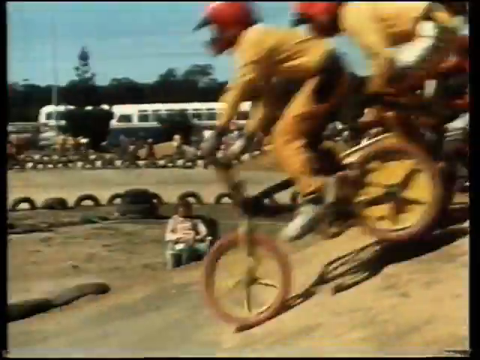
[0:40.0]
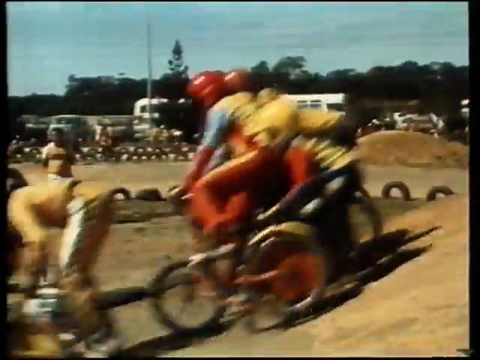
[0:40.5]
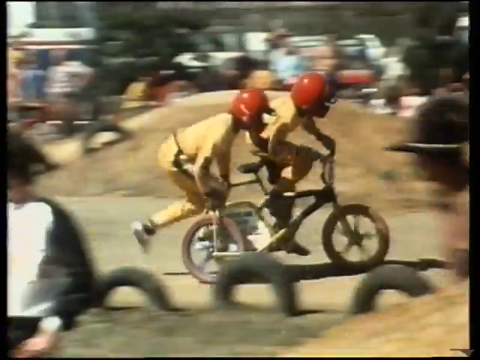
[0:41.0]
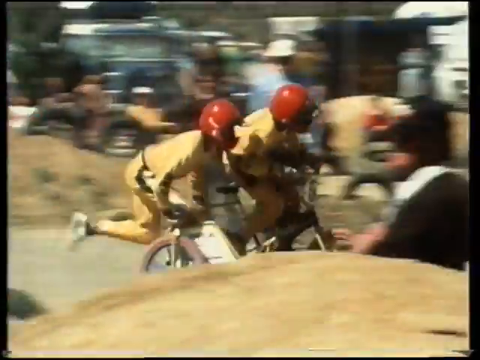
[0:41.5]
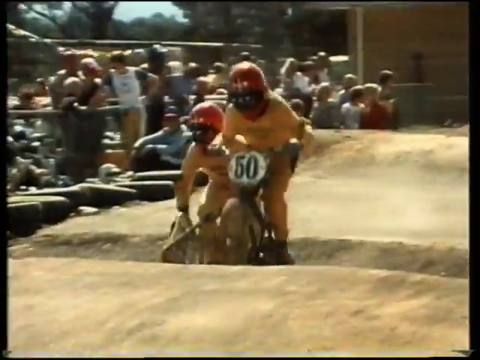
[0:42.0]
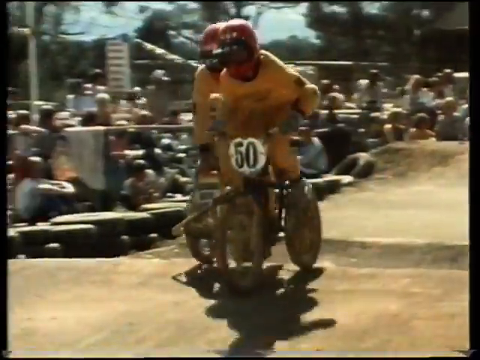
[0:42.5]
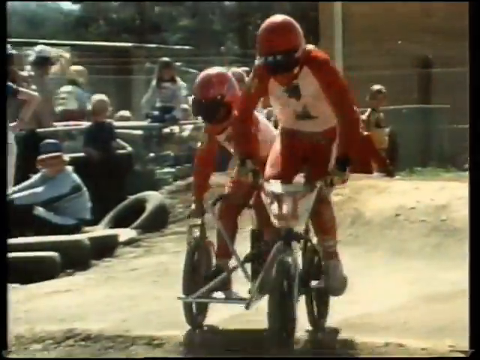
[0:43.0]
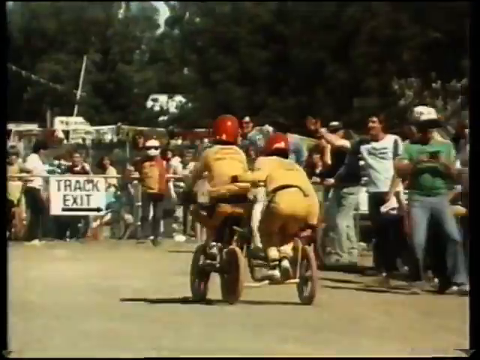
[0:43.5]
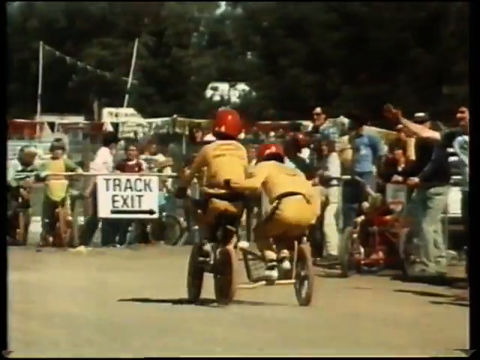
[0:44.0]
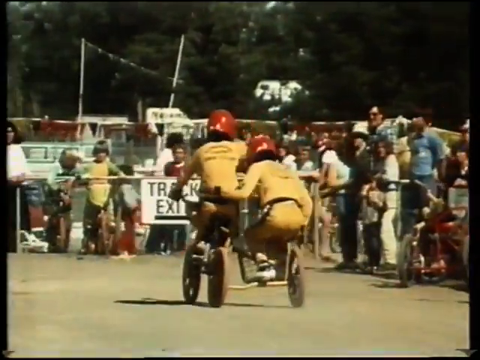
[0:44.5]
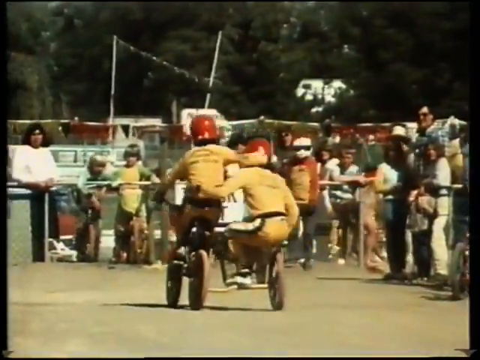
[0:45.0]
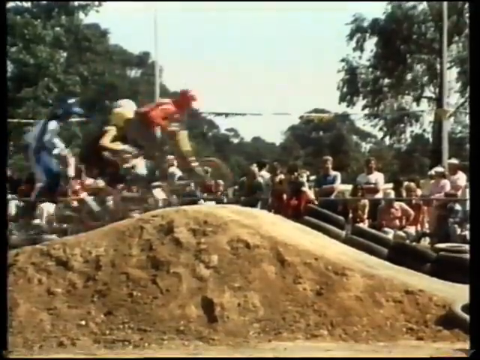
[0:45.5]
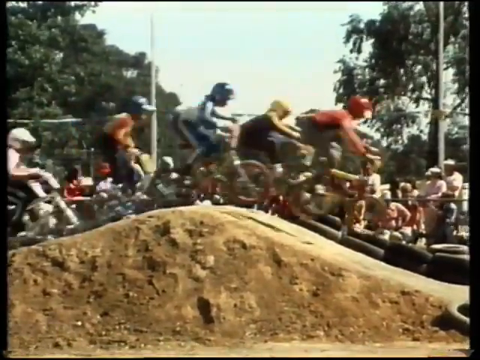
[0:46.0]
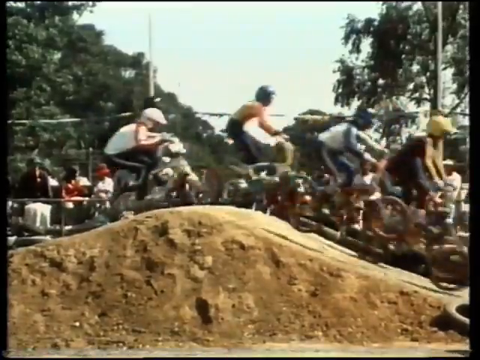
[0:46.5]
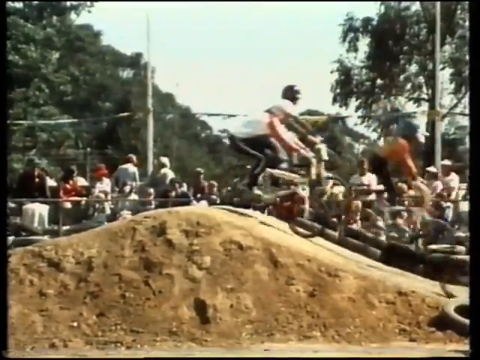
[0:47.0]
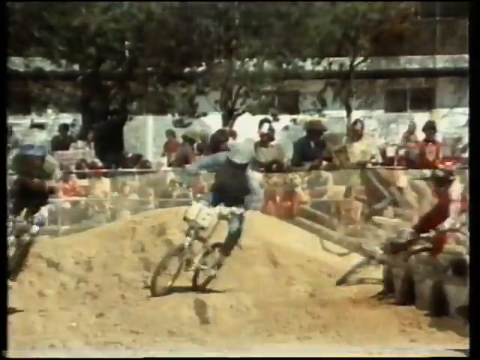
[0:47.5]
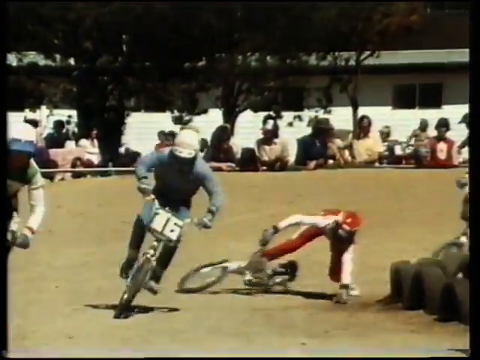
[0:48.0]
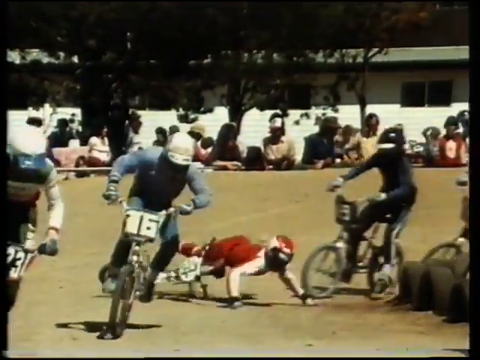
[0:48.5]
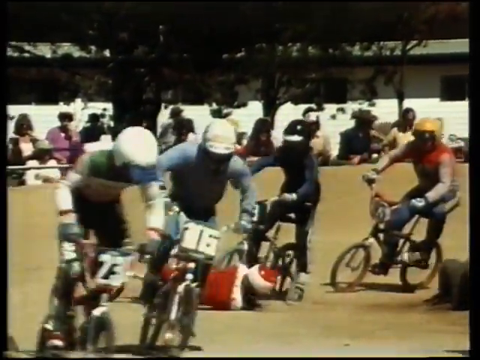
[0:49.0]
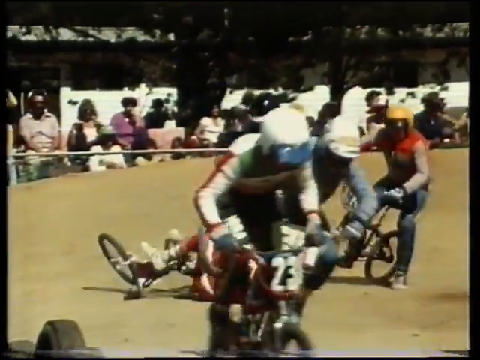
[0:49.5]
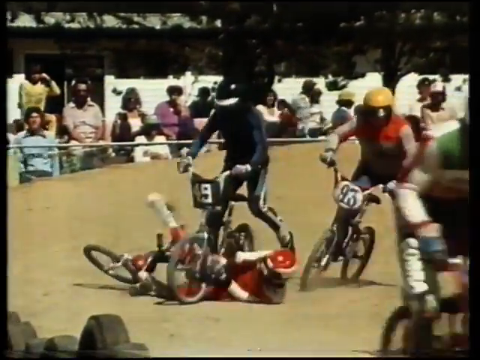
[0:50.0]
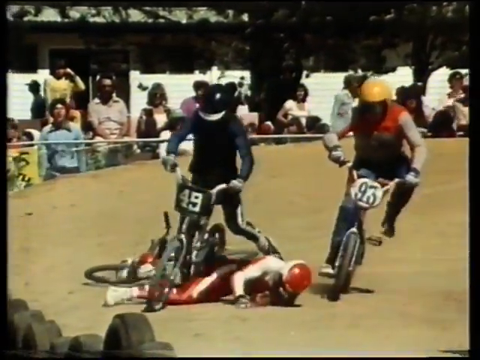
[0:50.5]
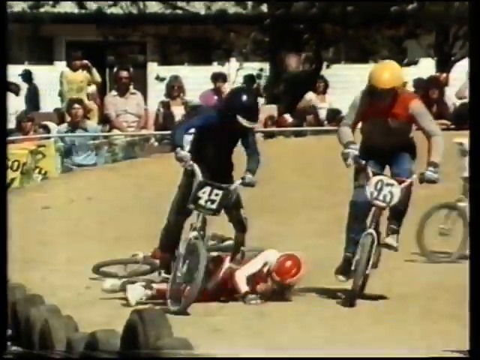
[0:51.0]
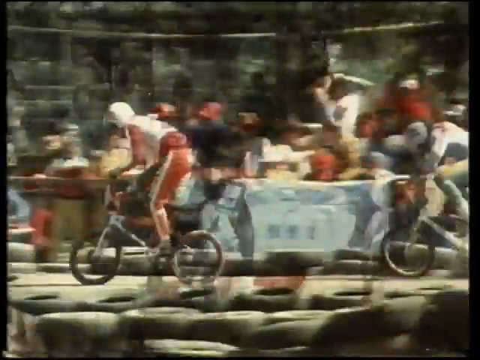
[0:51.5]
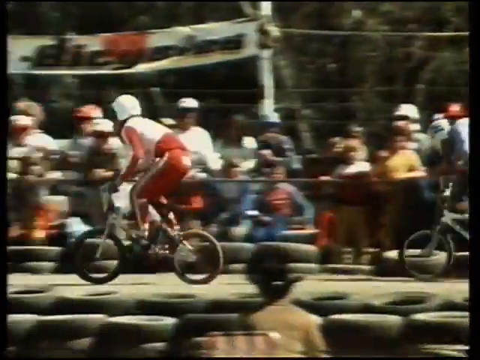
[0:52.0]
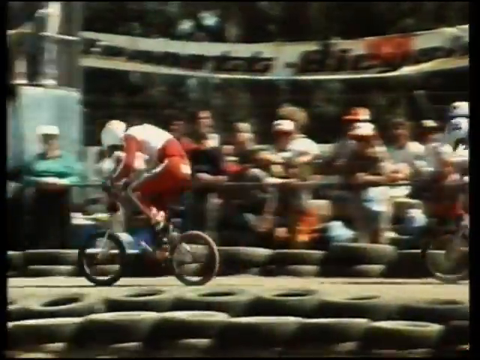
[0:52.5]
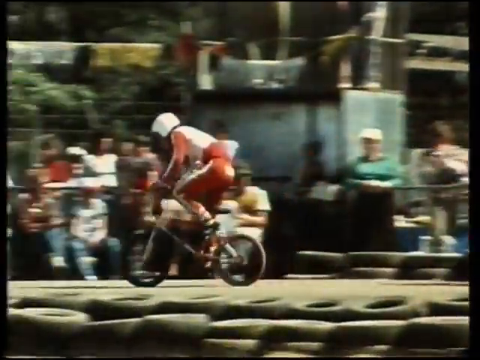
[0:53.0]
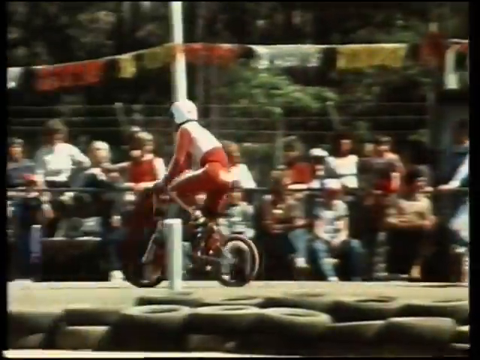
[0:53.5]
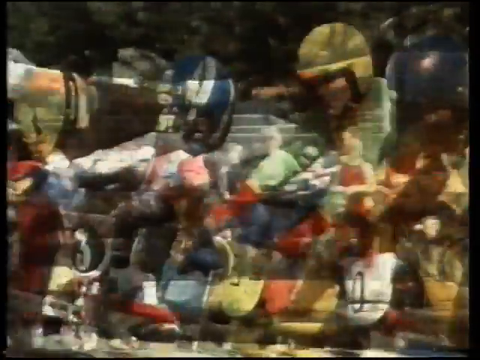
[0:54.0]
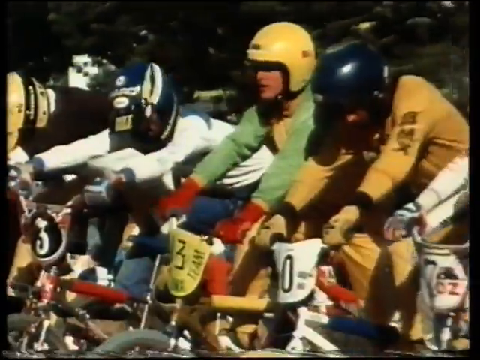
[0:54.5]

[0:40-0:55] With the title "1980 BMX racing Australia Oz old school" in the upper left-hand corner, a couple of riders race bicycles with side carts, and the kid in the back helps pedal; not everybody has a side cart. Then there is a bad crash: a kid in red goes down and the kid behind him runs him over with his bicycle. The fallen rider looks to be okay. The jumps or hills the riders have to ride are shown. Some of these riders may not be kids but adults or teenagers: they look big-bodied, older in the face, a lot bigger than the first kids, and they go a lot faster.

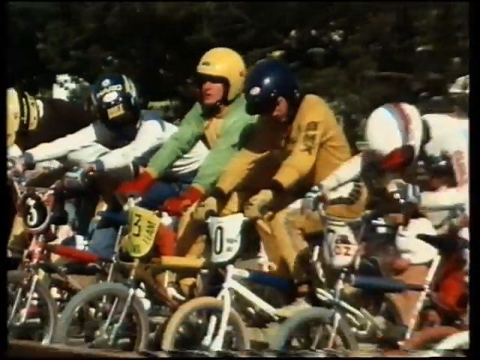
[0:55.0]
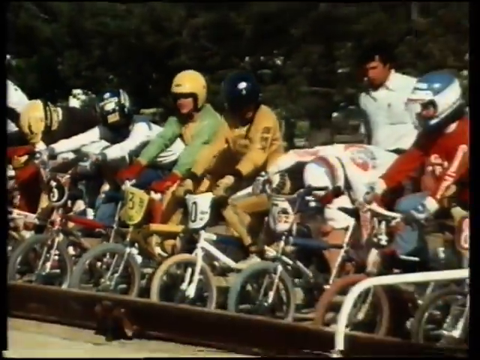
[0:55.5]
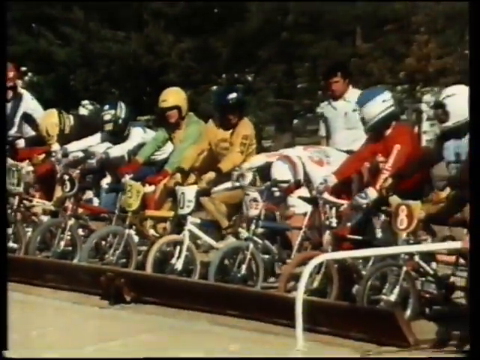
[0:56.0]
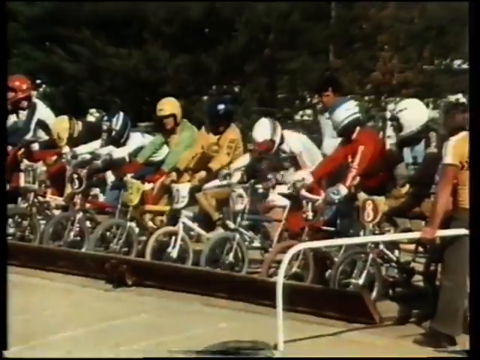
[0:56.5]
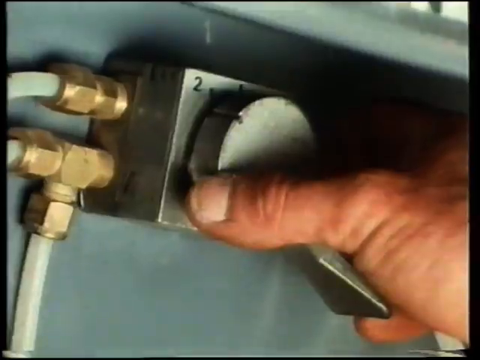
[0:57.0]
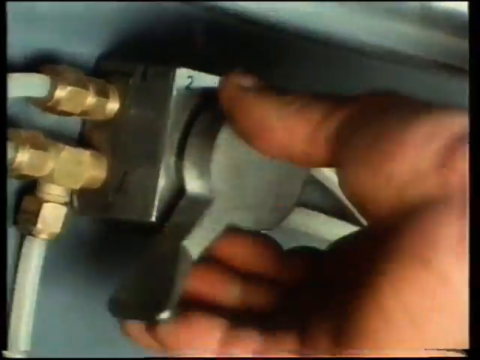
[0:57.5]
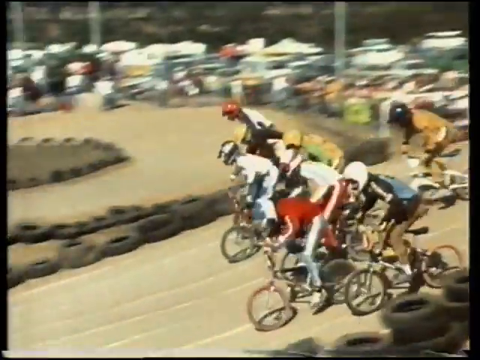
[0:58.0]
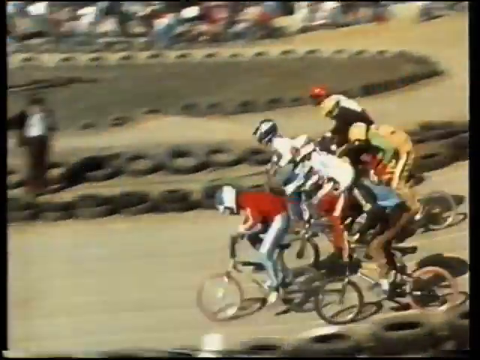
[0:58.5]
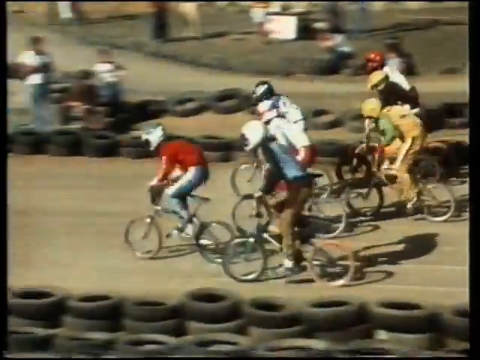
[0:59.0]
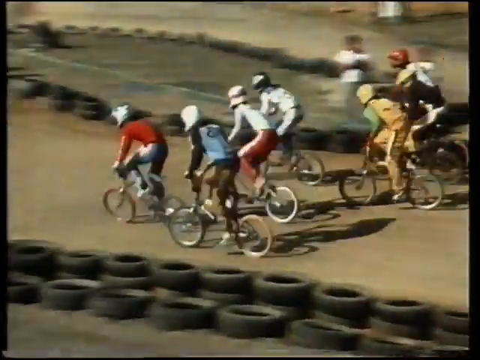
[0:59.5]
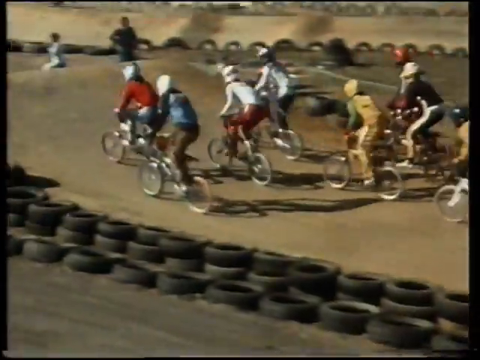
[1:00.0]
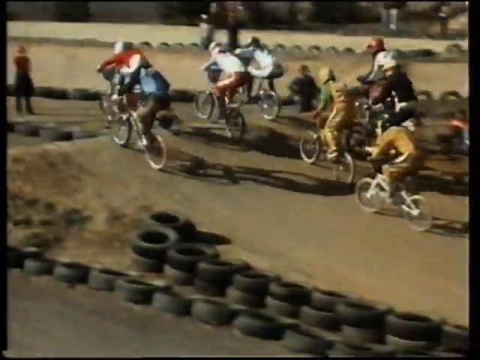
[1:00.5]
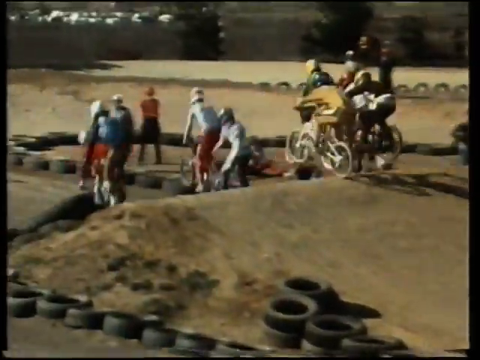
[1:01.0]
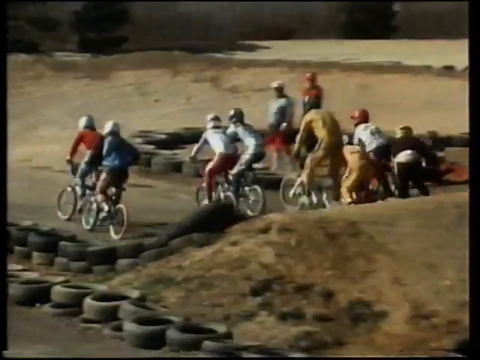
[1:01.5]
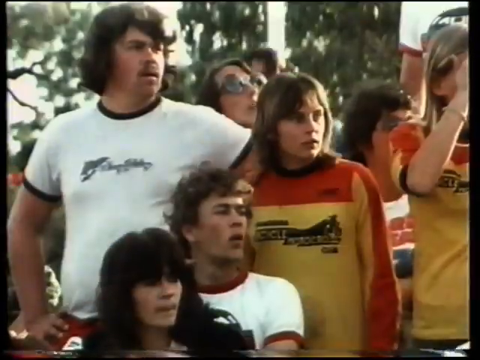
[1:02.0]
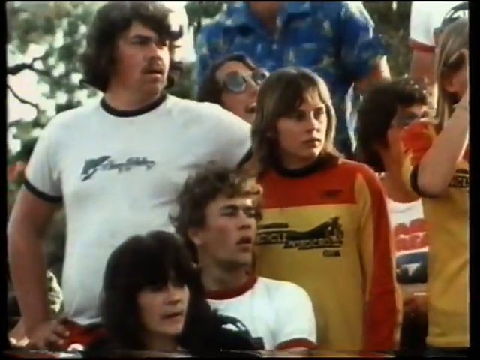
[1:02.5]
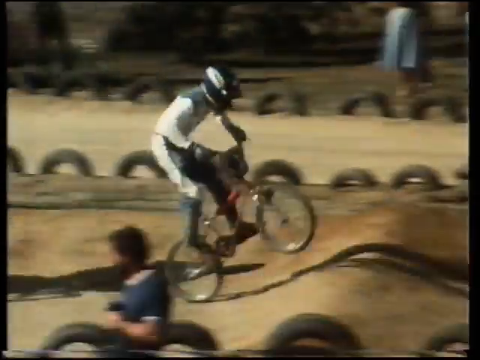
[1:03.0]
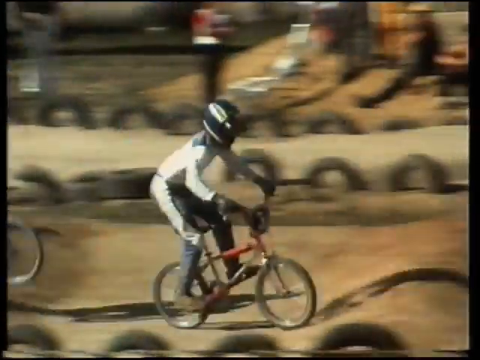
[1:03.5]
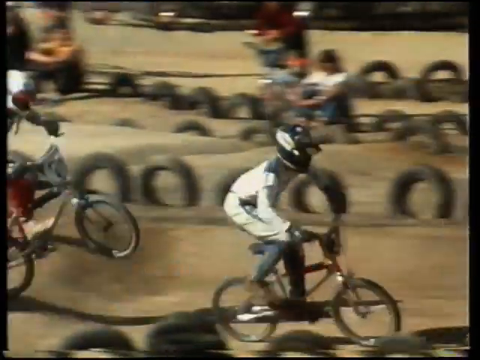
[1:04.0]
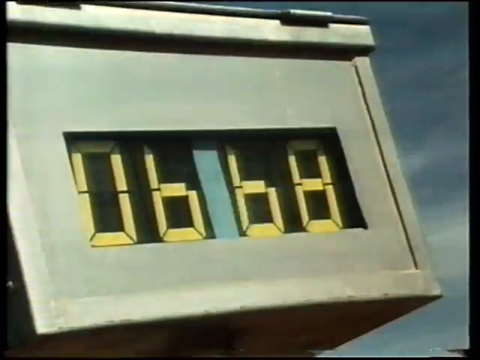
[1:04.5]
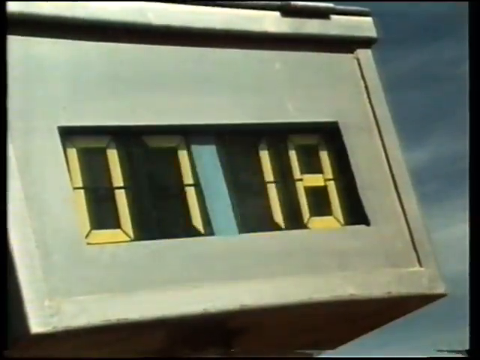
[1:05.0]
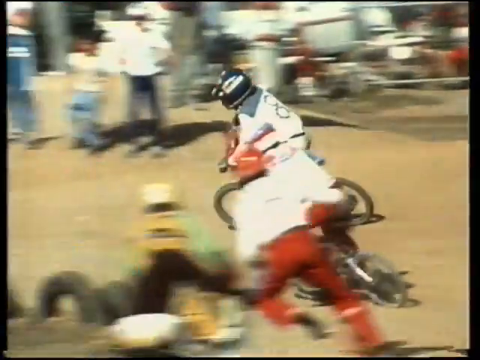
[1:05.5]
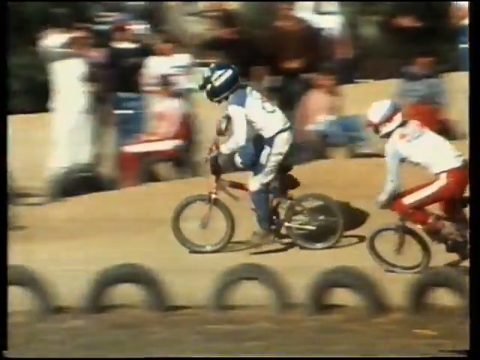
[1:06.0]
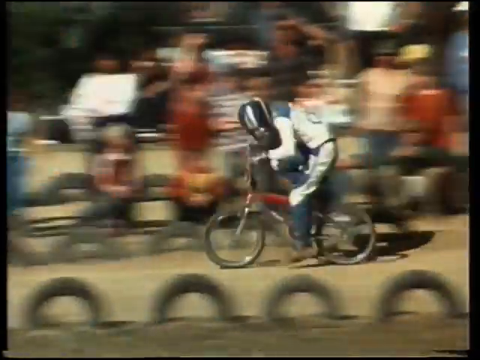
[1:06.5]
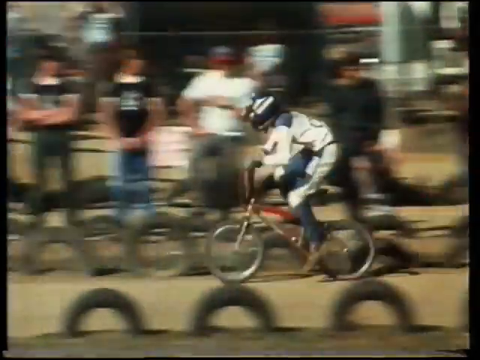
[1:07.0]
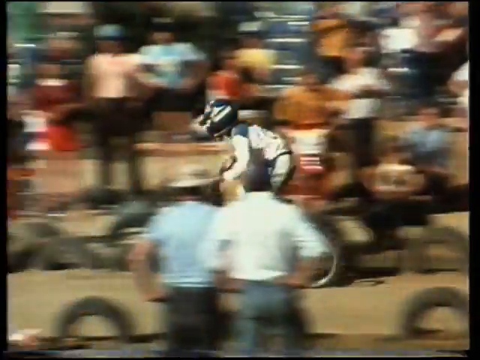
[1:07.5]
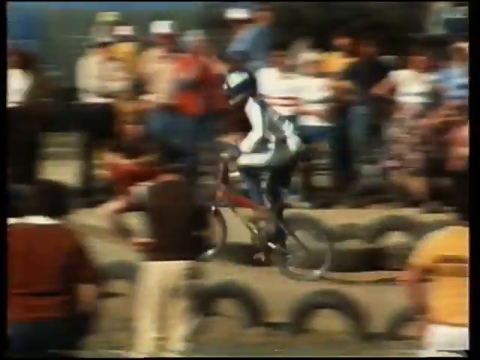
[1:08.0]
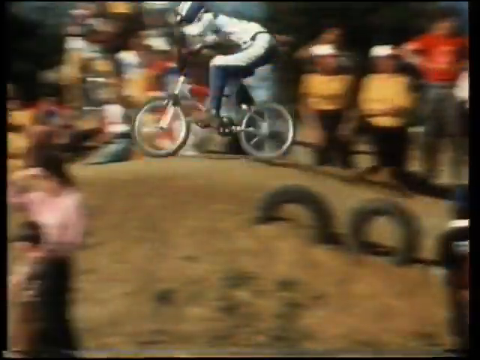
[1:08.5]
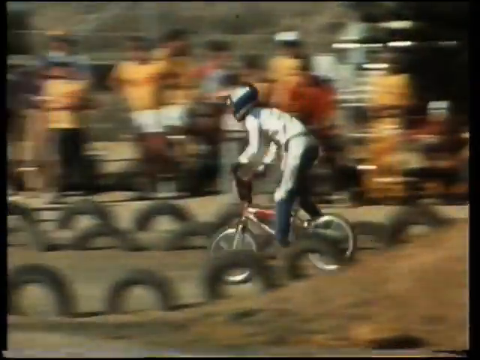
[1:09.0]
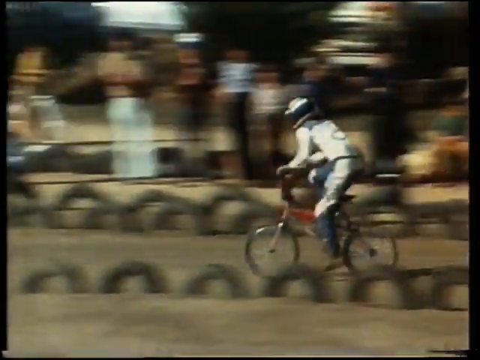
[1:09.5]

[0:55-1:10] Under the title "1980 BMX racing Australia Oz old school," riders start a race; the age group is unclear, possibly older, since the riders are bigger-bodied. One rider in all white, possibly a man, is clearly at the very front, pedaling faster than everybody else and way out ahead of the pack, with the others not even in the final pictures. People in the crowd are shown with 80s haircuts and very tight-fitting clothes; a man shown has a little mustache and a mullet. A family is shown cheering, presumably the lead rider's family. The race is clearly won by that rider. The old-school timekeeping machine is shown, though the time is not visible.